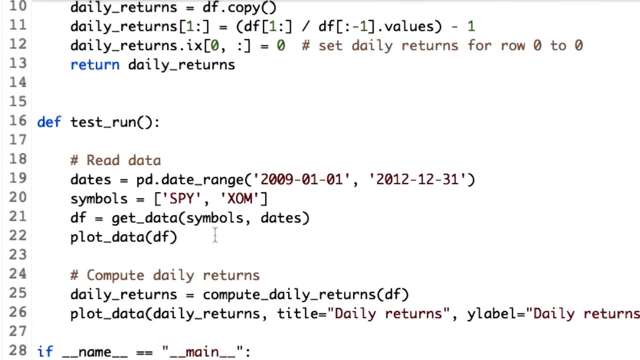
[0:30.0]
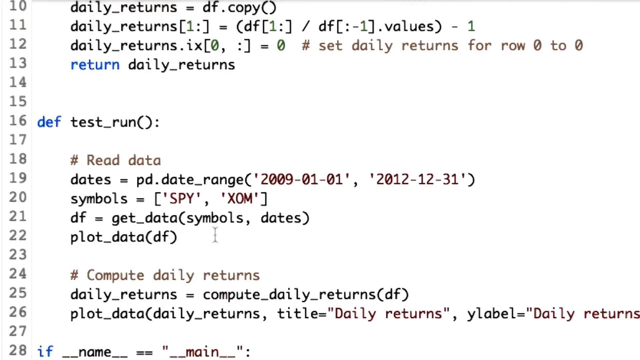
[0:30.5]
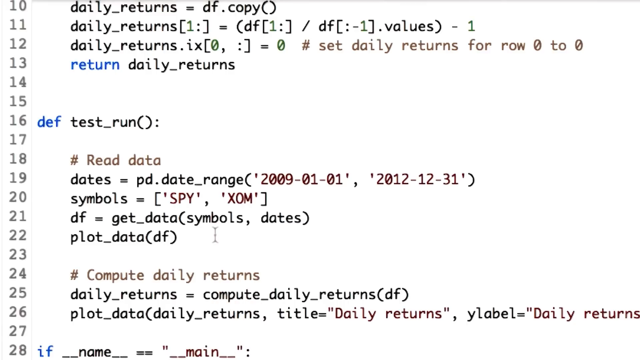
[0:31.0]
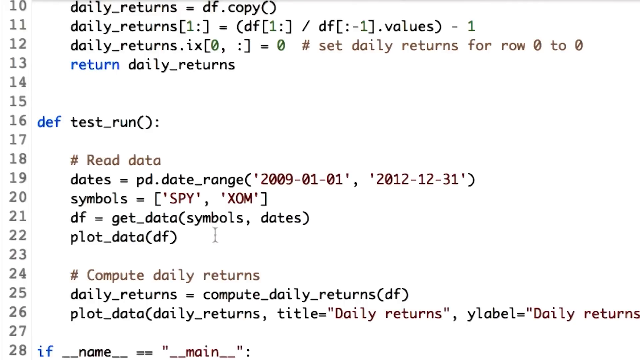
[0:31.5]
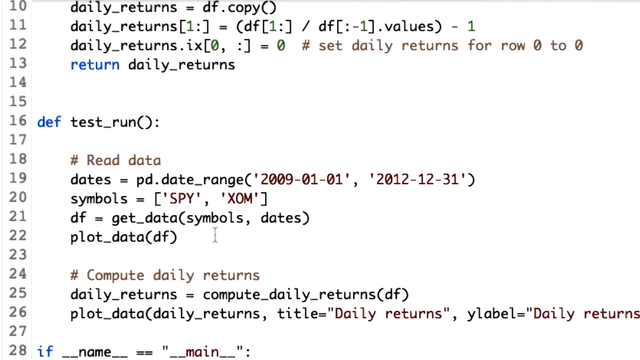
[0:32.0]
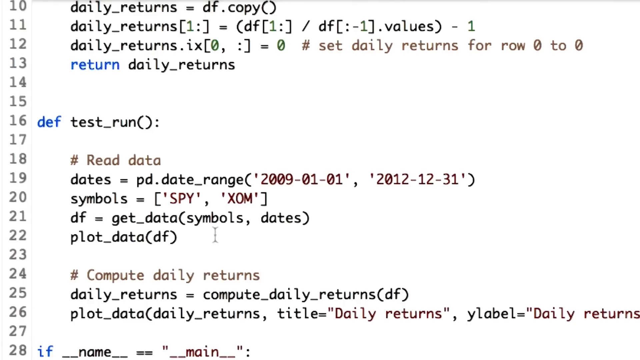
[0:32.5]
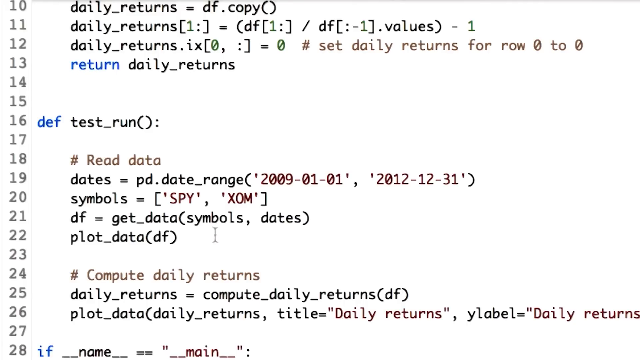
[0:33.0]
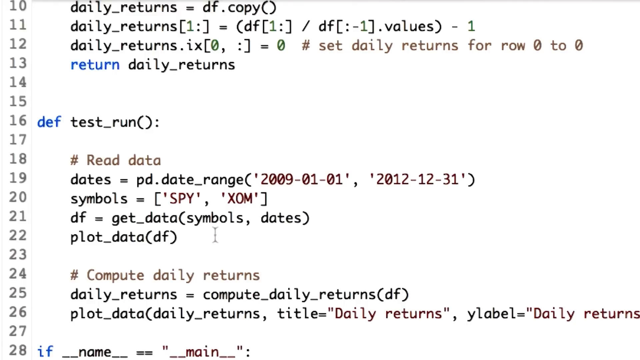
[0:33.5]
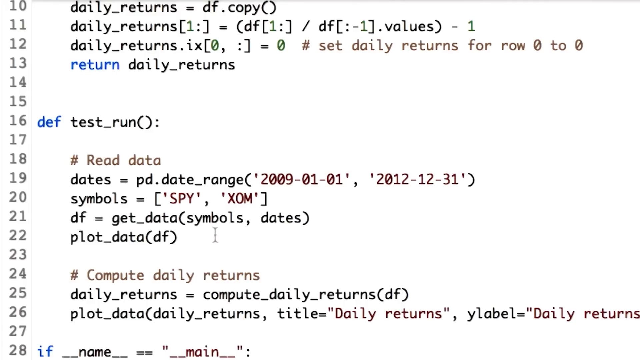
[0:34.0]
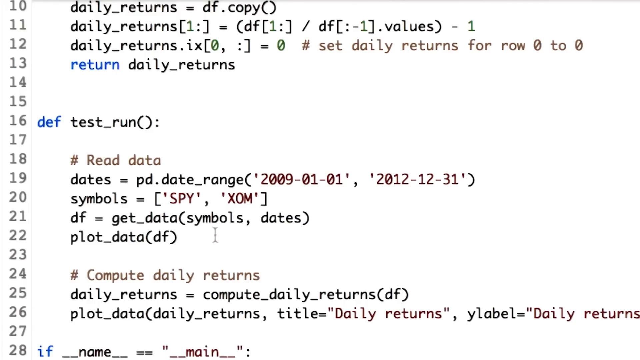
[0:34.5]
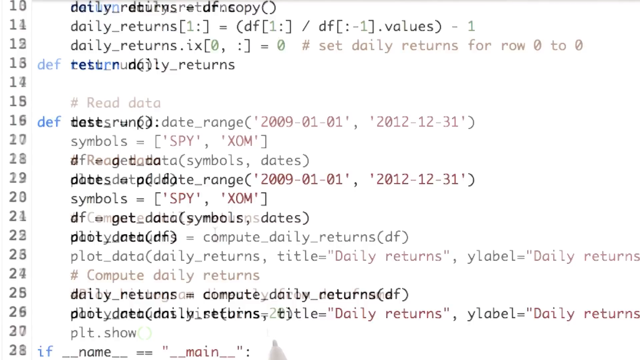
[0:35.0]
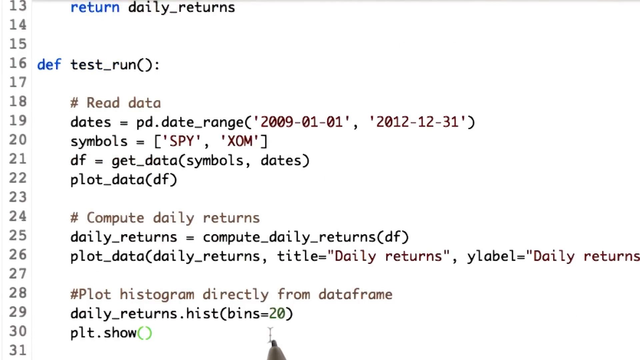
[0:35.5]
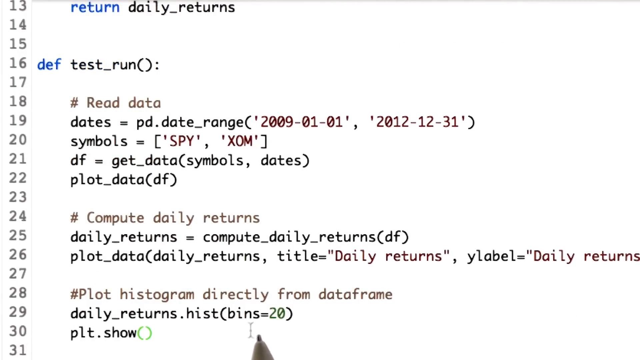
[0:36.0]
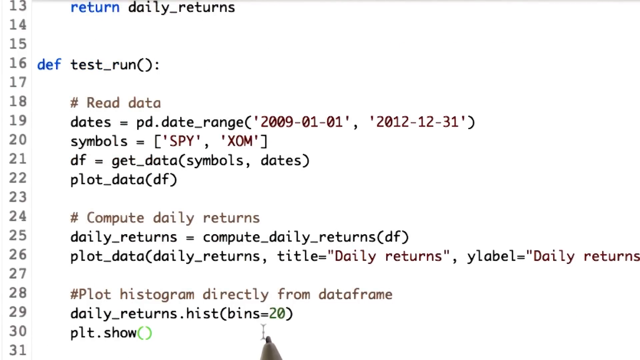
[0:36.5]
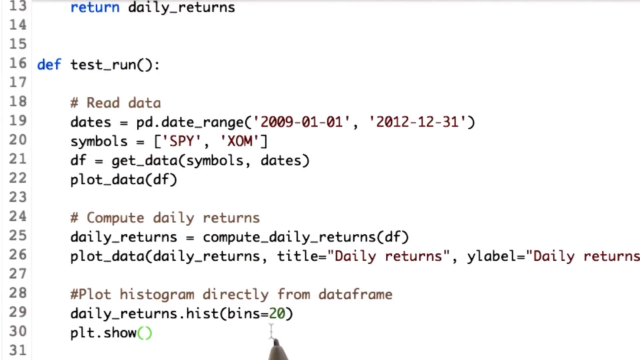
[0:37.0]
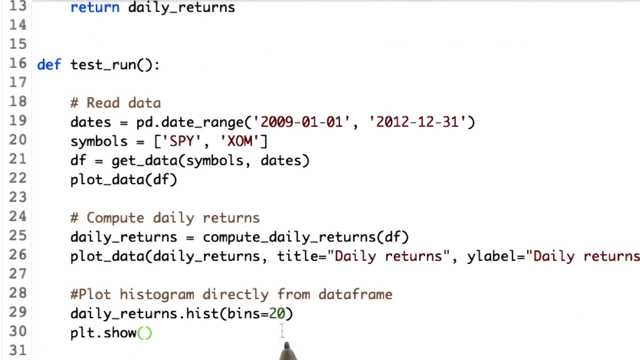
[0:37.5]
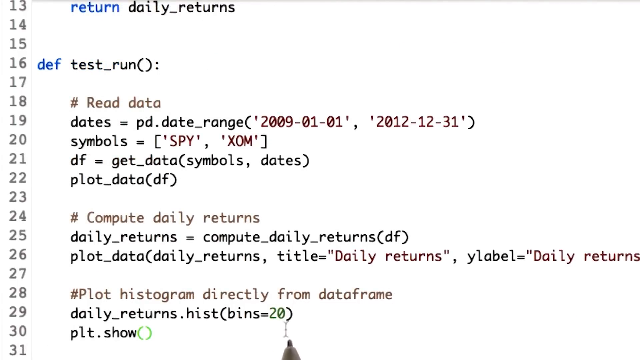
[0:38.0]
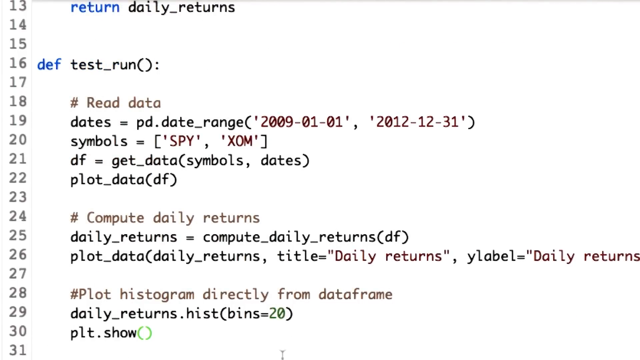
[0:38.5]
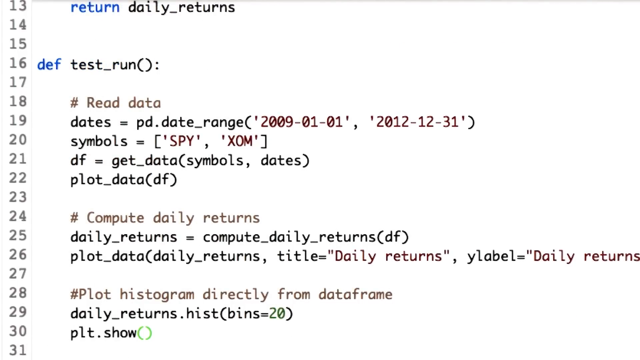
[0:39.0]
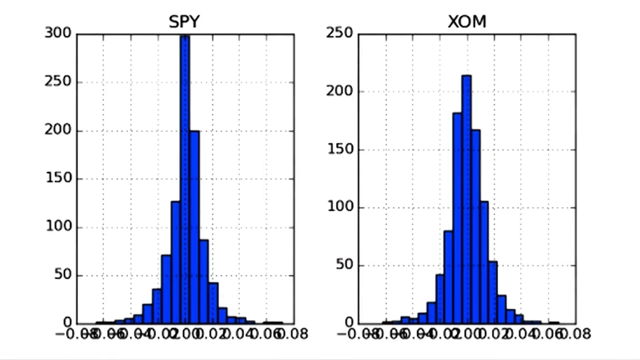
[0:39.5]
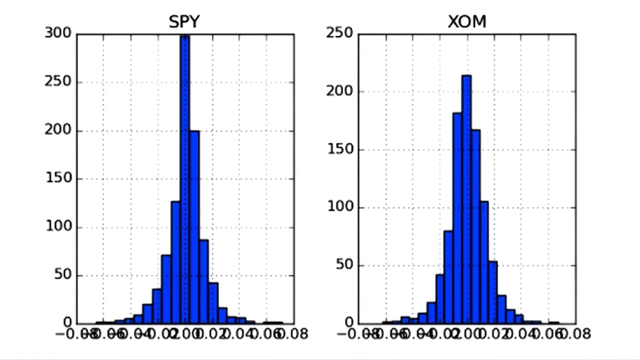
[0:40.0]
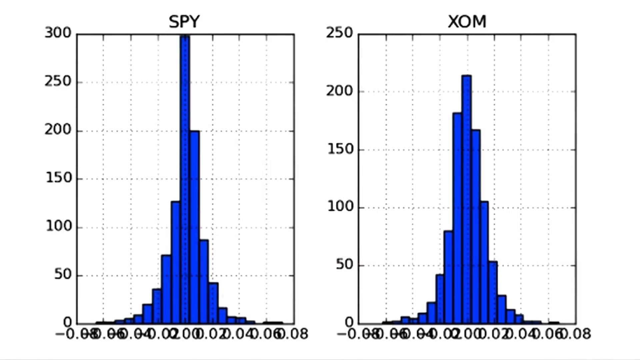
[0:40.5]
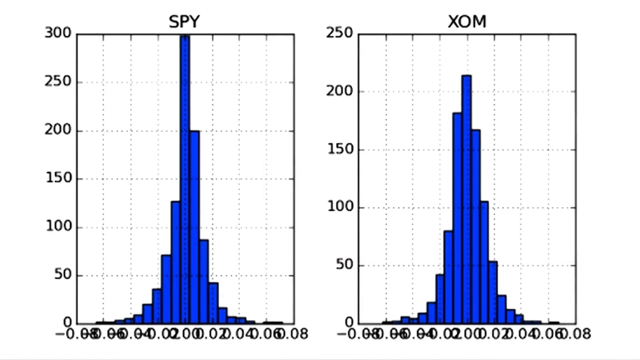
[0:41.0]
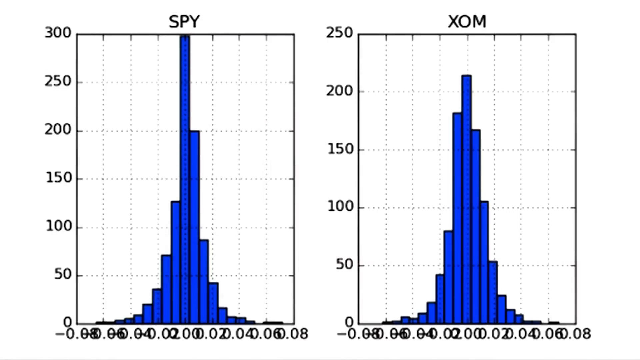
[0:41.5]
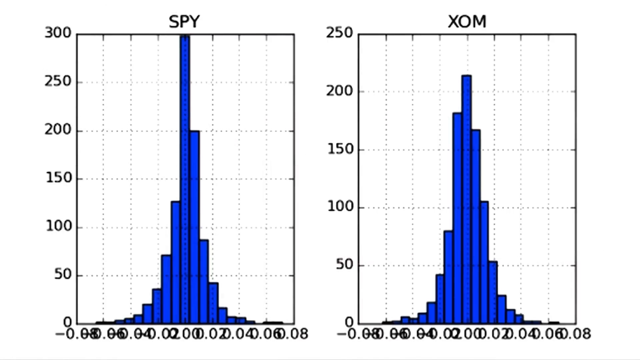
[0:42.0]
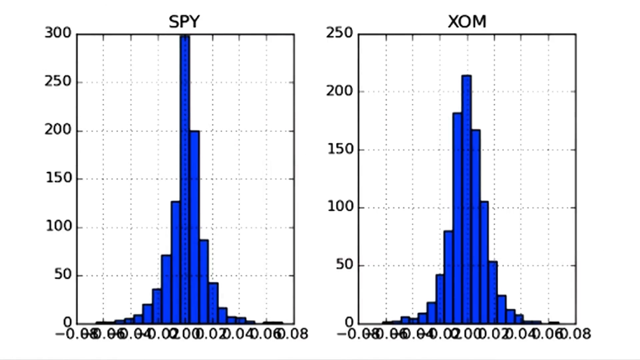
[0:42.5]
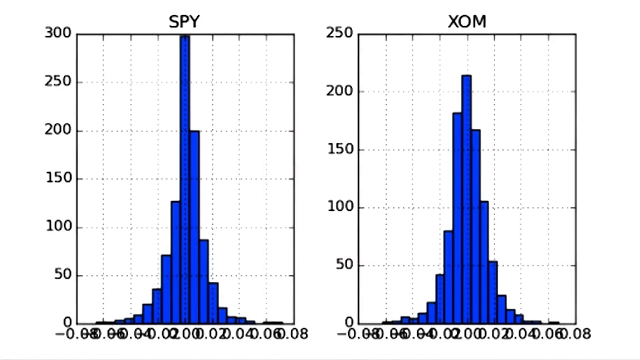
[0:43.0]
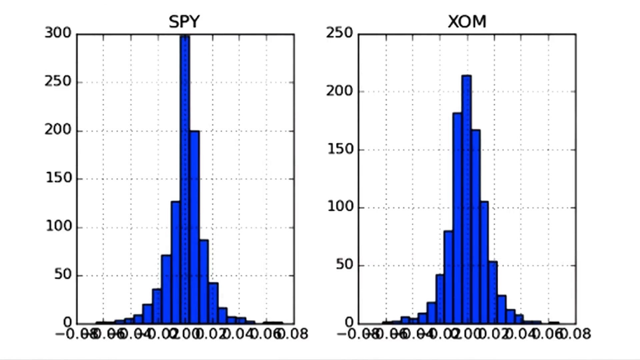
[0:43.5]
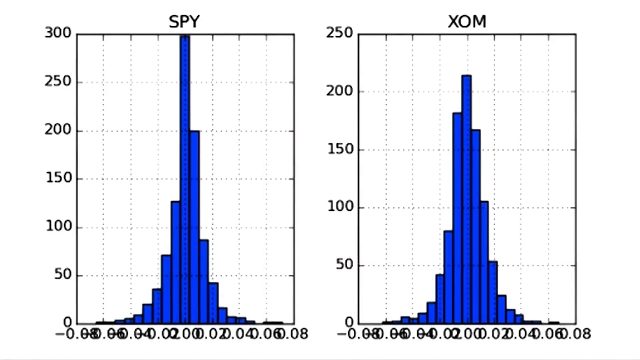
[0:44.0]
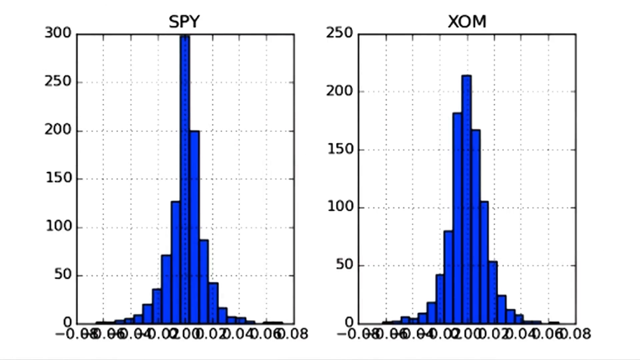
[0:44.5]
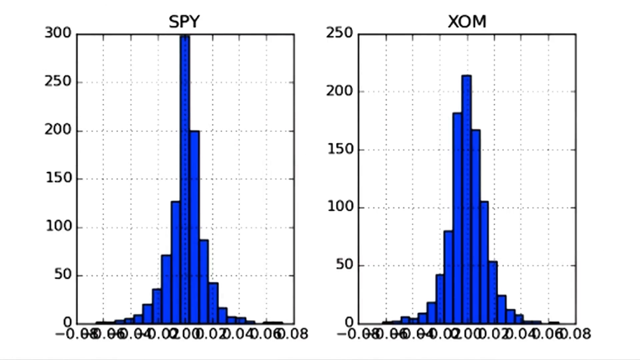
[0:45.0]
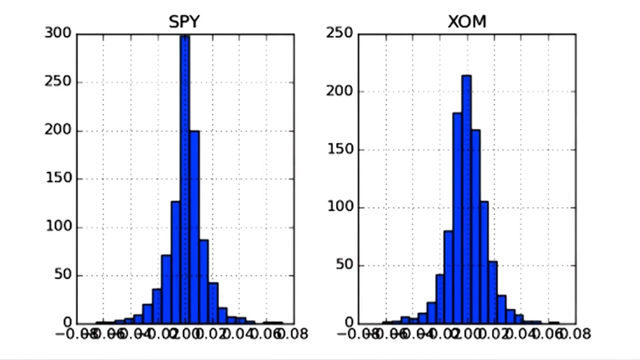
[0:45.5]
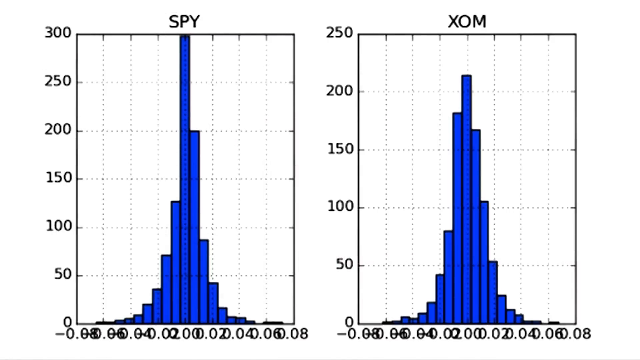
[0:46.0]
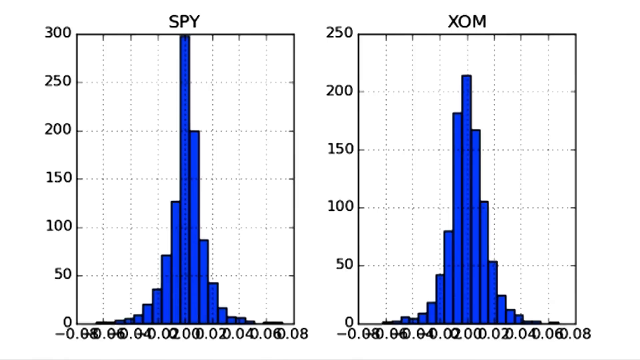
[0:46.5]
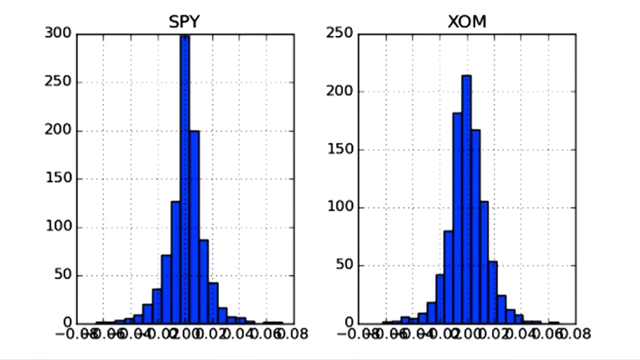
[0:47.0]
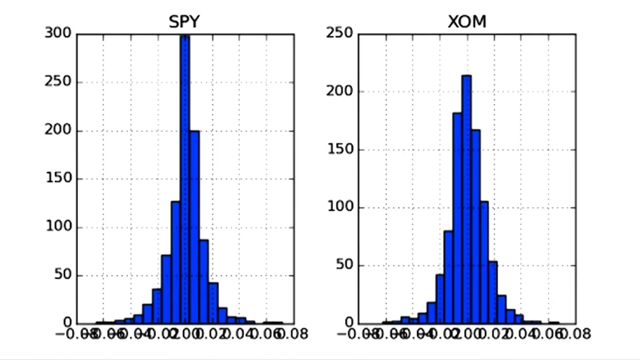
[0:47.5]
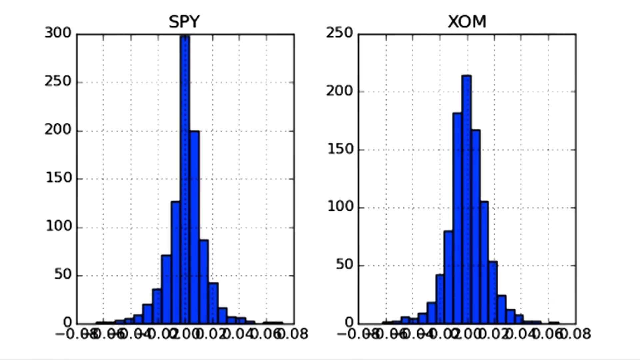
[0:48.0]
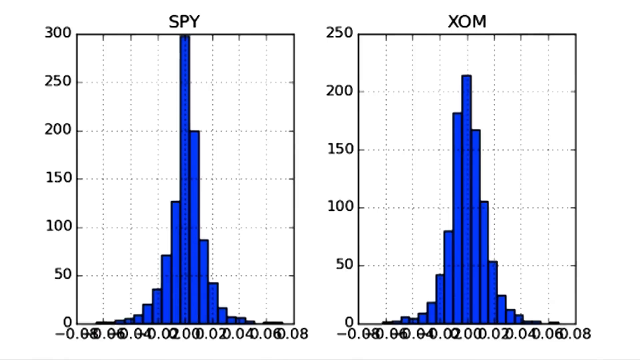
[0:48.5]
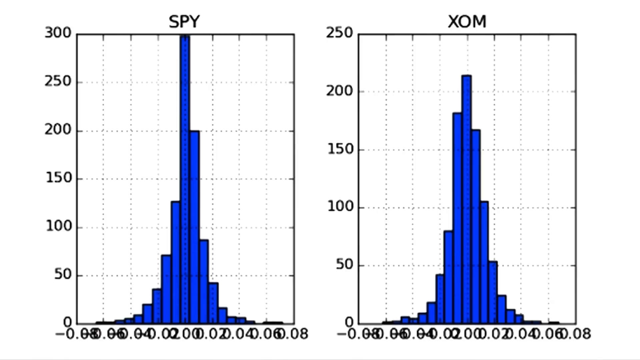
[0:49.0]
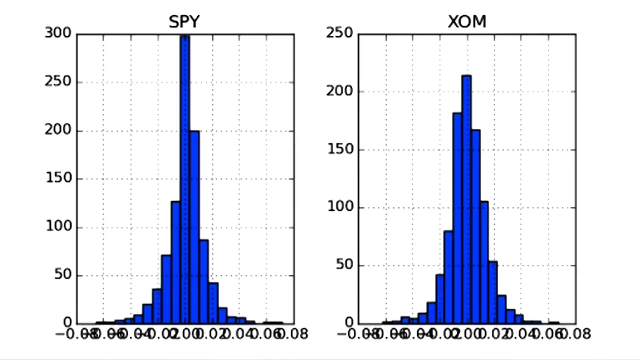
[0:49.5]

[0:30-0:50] The same page of code stays on screen for a while. A fade then leads into the next portion of the code, with the row numbers along the left side now reading from 13 to 31. The pen is again at the bottom of the screen, pointing to a certain part of the code. Another fading transition reveals two bar charts side by side: the one on the left is labeled "SPY" at the top and the one on the right is labeled "XOM" at the top. The vertical axis of the left chart ranges from 0 to 300 and that of the right chart from 0 to 250. The bars are dark blue, and everything else is black and white. The scale at the bottom is crowded with lots of zero-point-something numbers. Together with the earlier code about computing daily returns, the charts suggest this is perhaps financial code to do with the markets and trading.